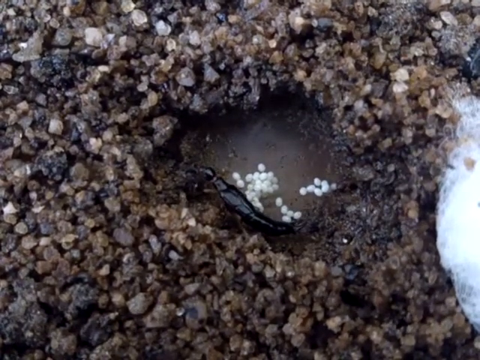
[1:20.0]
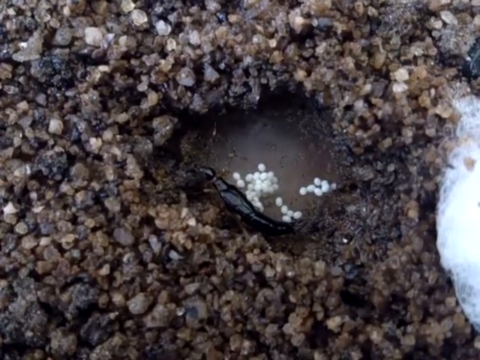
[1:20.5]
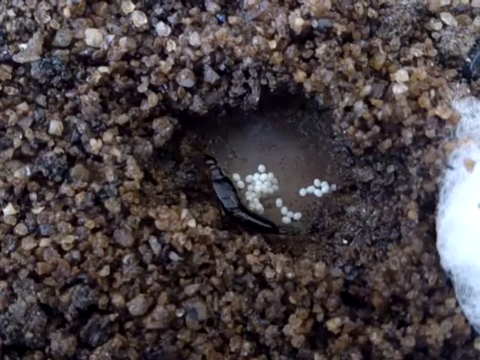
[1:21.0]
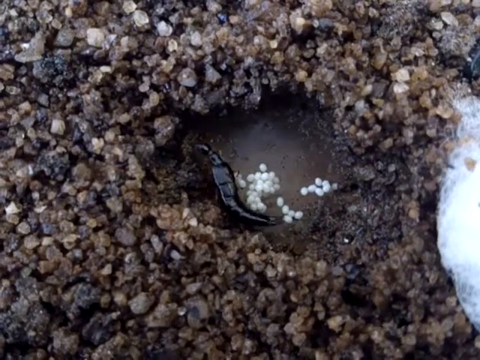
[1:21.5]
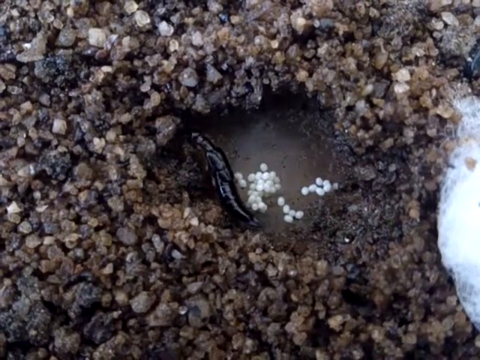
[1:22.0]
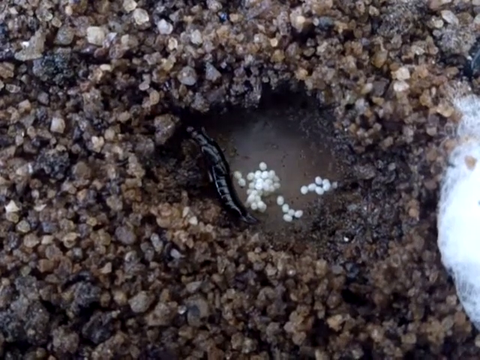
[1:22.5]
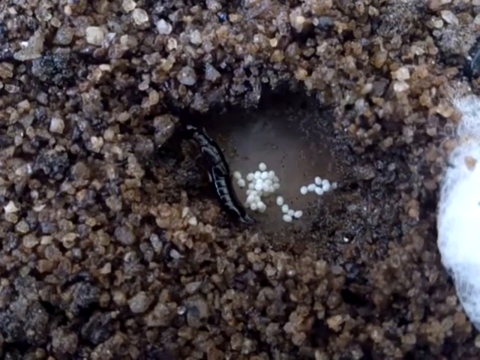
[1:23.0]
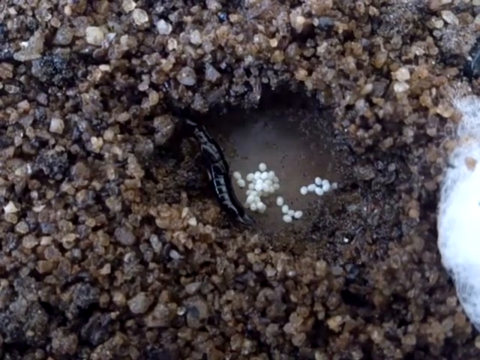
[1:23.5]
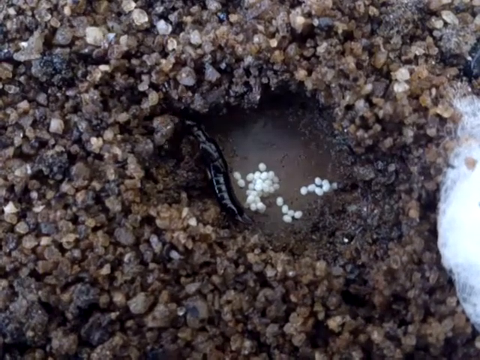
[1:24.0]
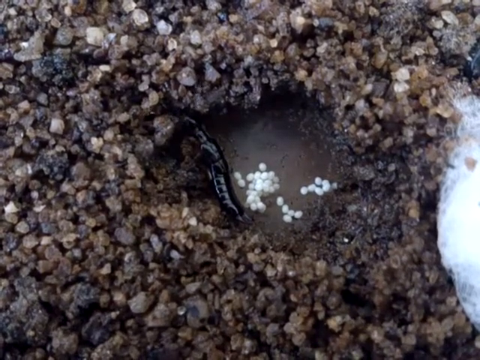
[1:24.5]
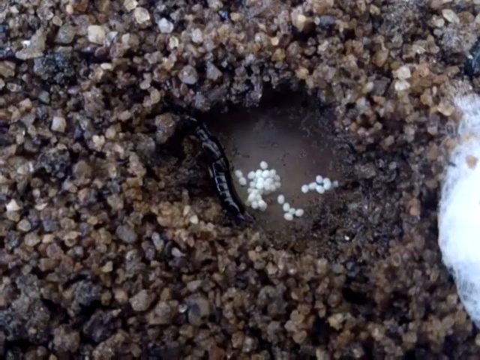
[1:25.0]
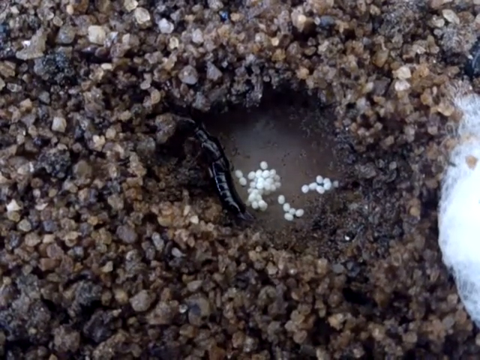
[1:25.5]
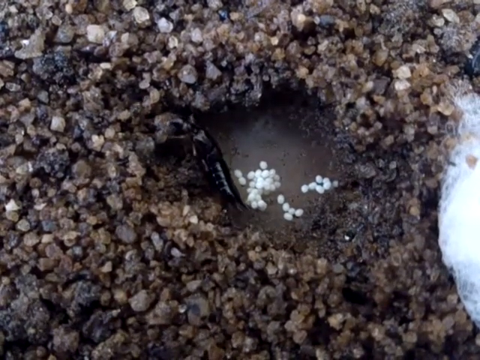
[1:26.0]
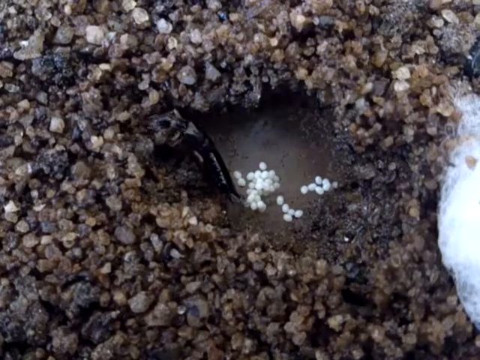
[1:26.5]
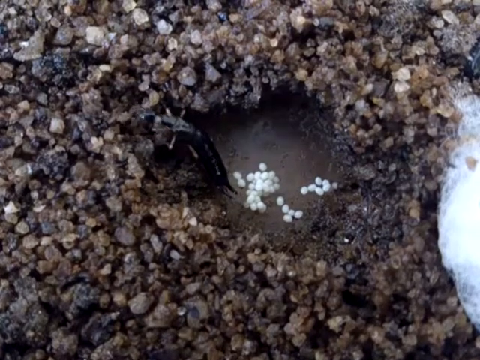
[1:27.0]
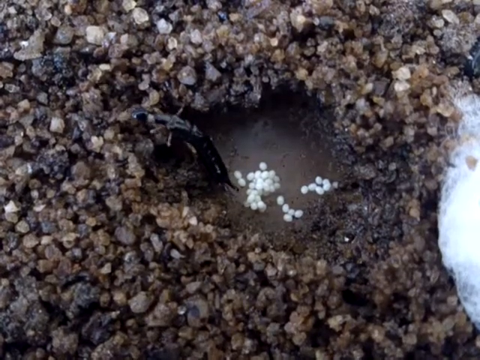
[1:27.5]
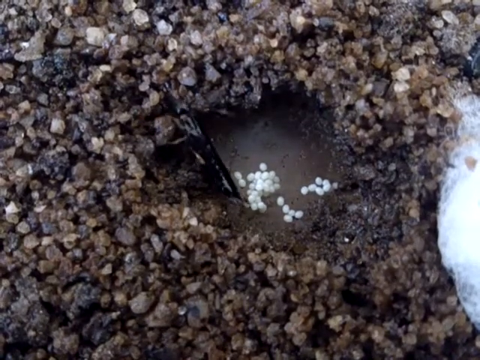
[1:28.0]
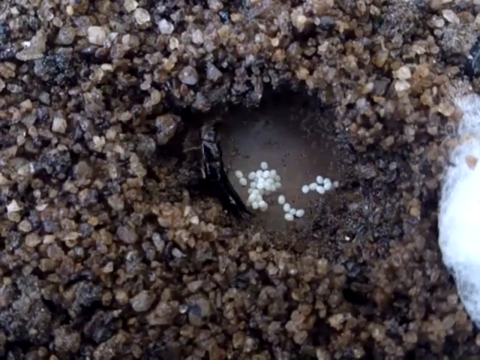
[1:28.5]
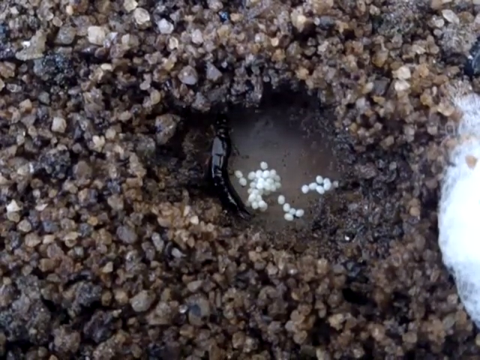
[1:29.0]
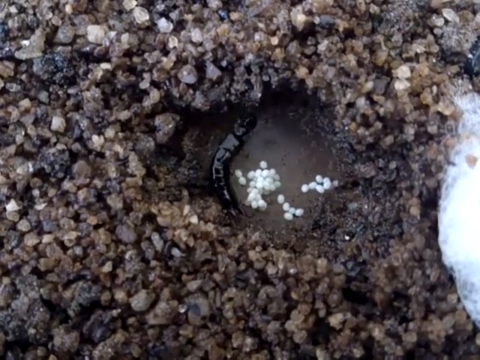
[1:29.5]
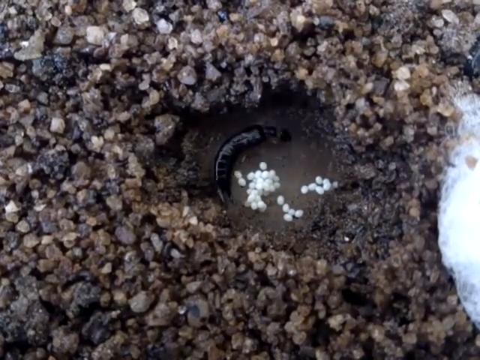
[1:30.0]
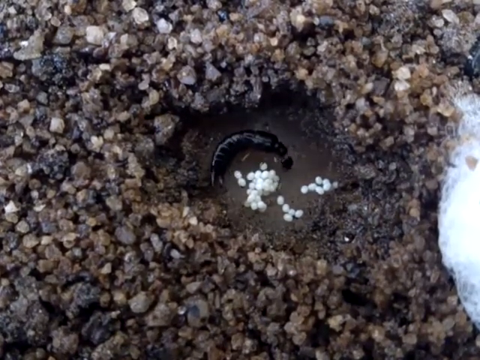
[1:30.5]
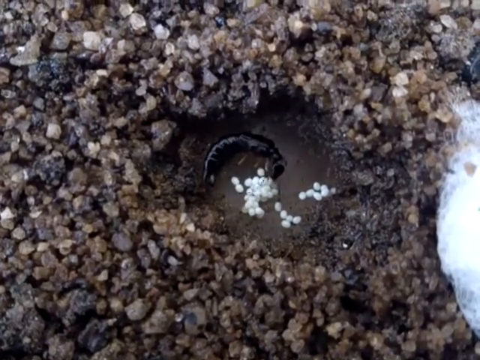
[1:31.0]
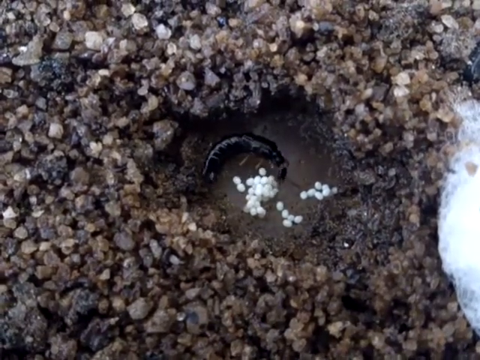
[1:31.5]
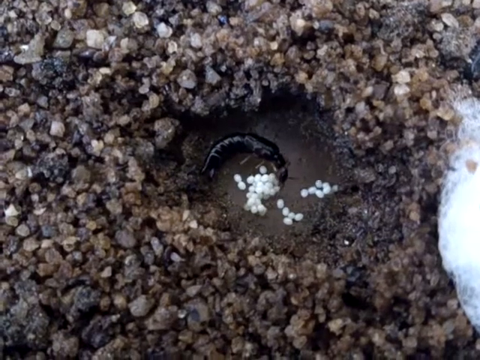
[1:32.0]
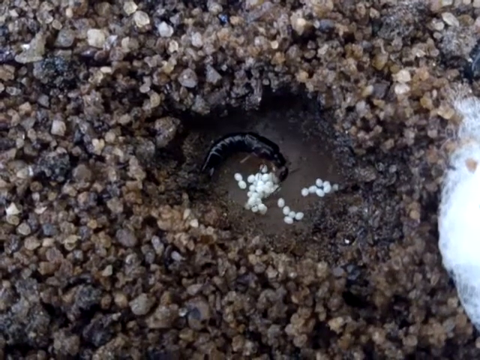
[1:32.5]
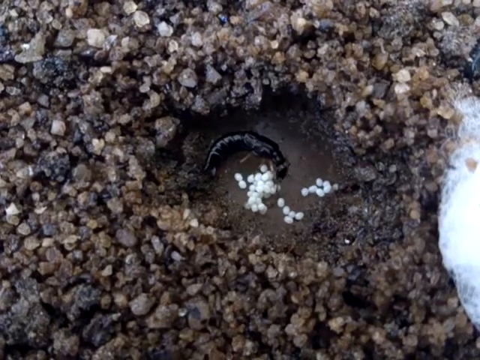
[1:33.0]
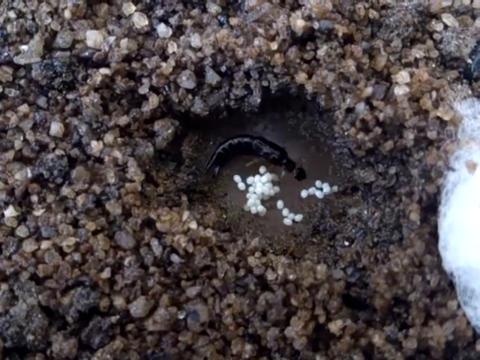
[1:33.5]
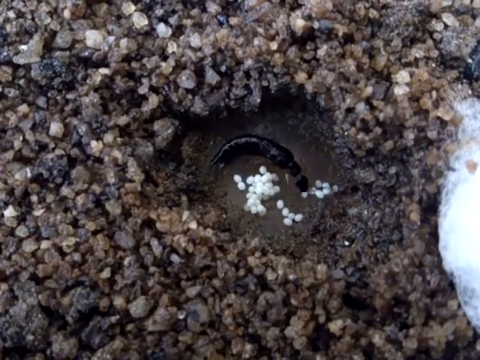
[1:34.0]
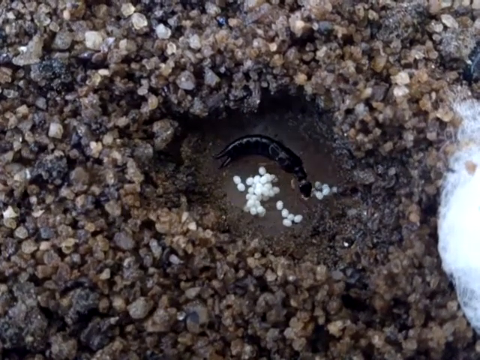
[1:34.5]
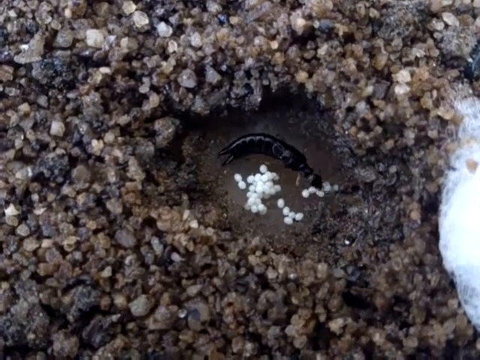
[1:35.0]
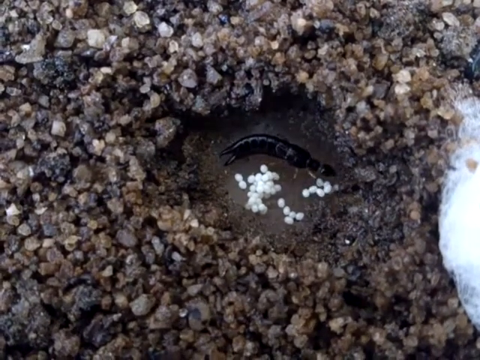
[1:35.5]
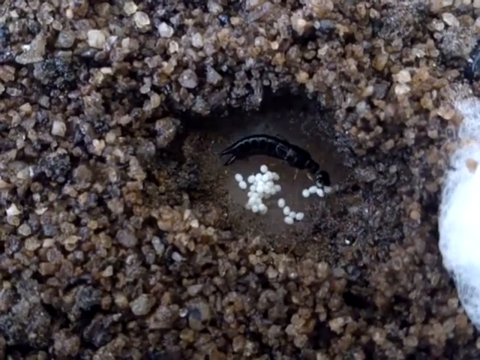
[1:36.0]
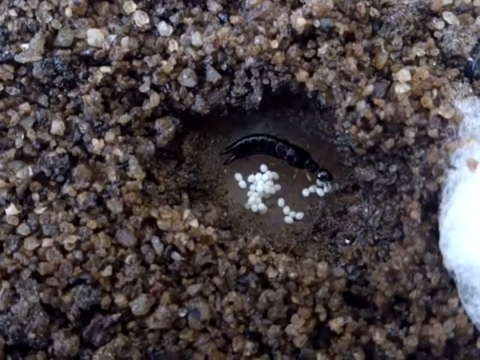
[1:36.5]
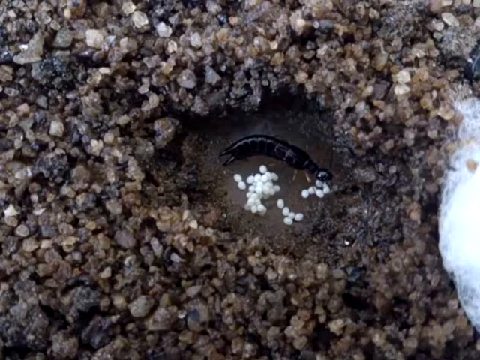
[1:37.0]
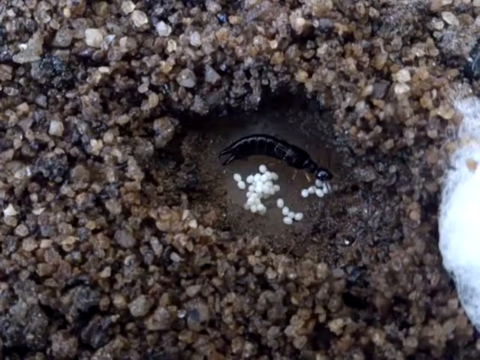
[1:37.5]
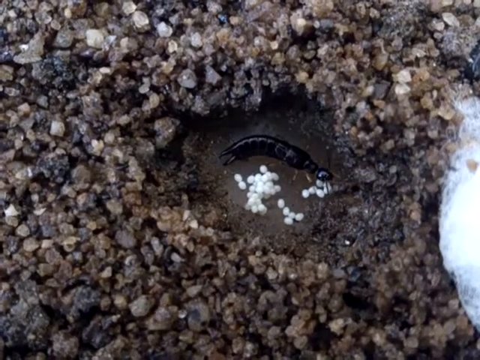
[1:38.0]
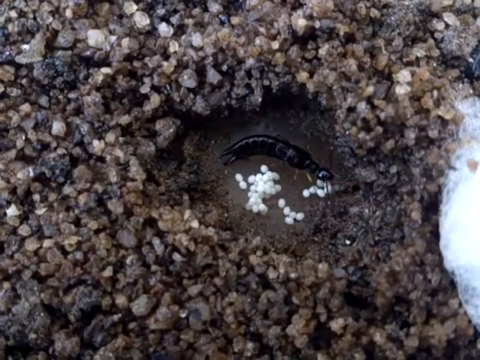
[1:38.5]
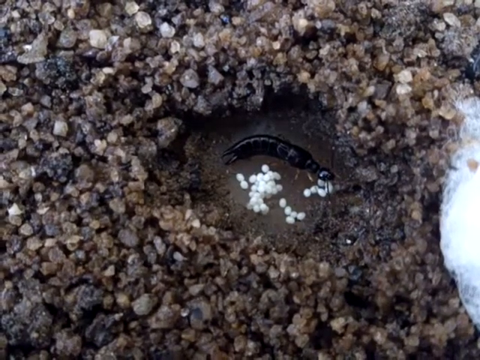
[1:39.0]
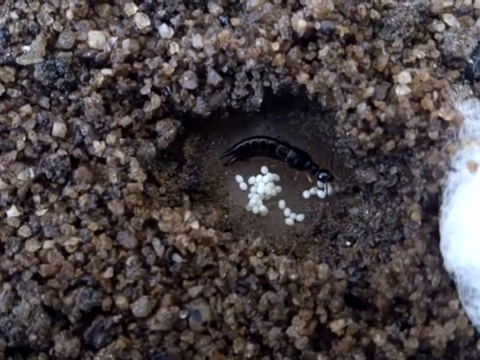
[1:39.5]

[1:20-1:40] A close-up shows very wet, gravelly ground with a small indentation in the center of the screen that has water in it. Floating in the water are several little white balls that appear to be eggs or larvae. A long black insect, roughly the length of the pool, explores the edges of the pool. It does not leave the pool, but it climbs up the edge onto some of the gravel and then goes back to inspecting the little balls. It seems to be exploring the little white balls a little and the boundaries of the pool where they are floating.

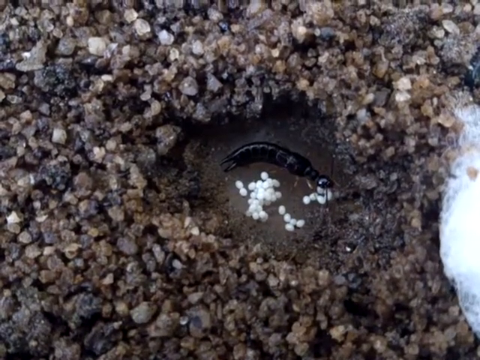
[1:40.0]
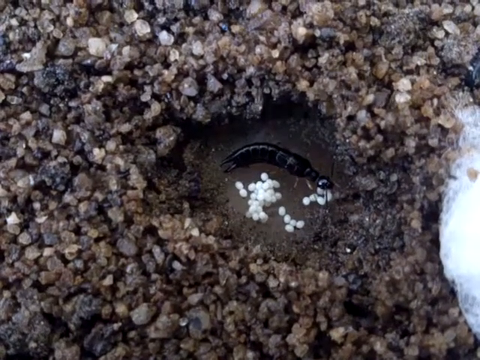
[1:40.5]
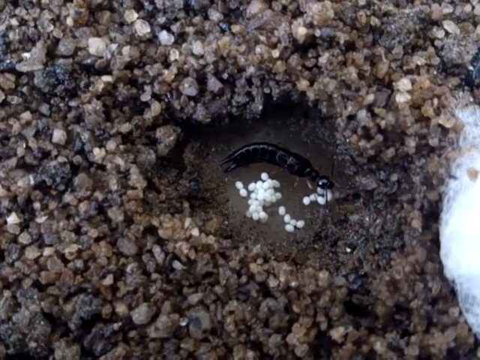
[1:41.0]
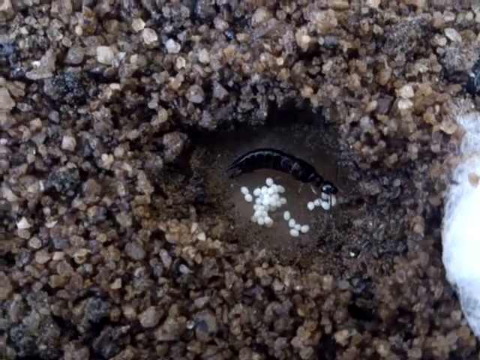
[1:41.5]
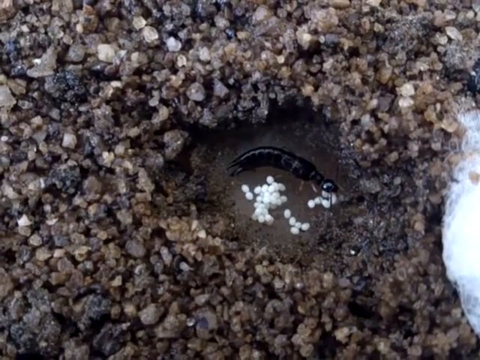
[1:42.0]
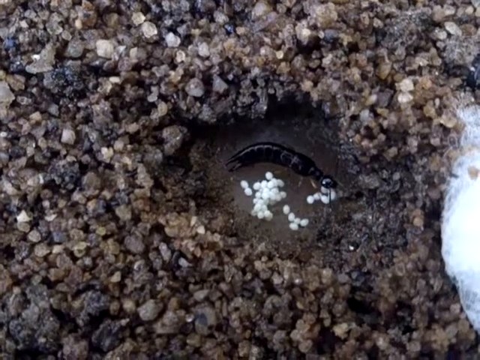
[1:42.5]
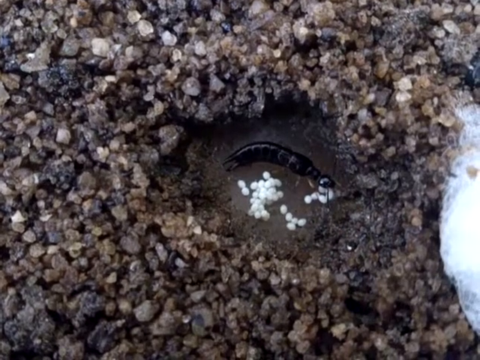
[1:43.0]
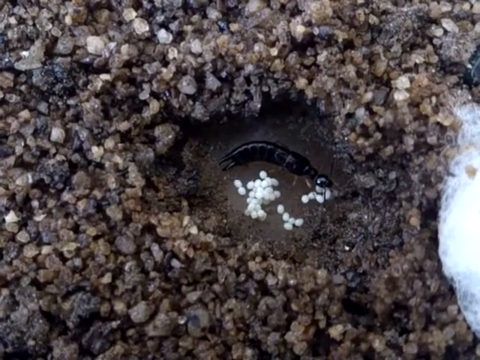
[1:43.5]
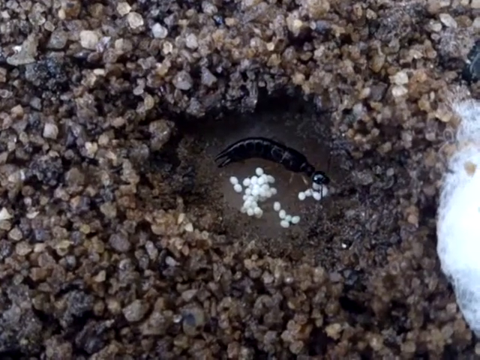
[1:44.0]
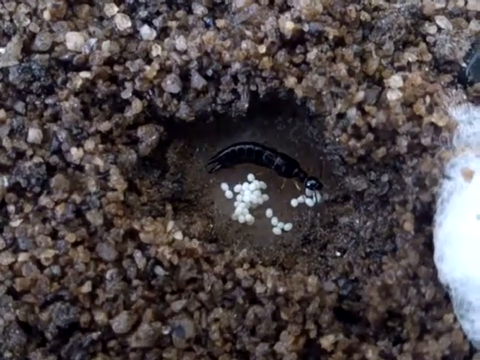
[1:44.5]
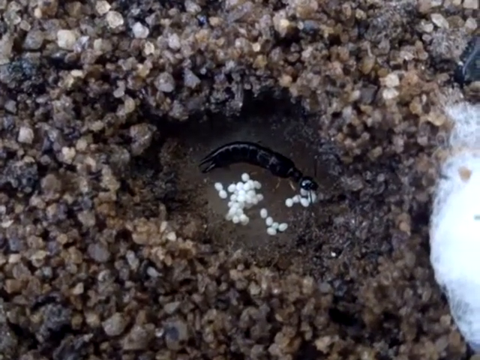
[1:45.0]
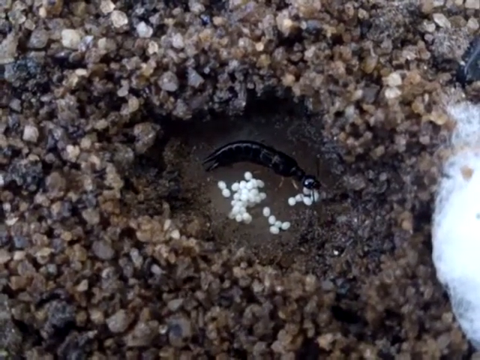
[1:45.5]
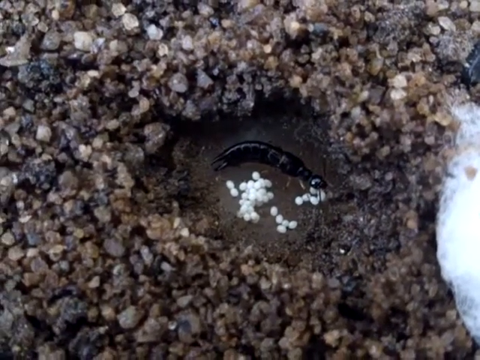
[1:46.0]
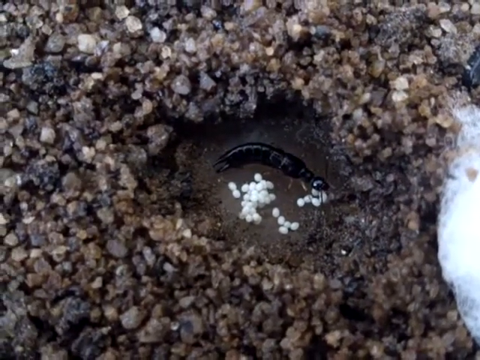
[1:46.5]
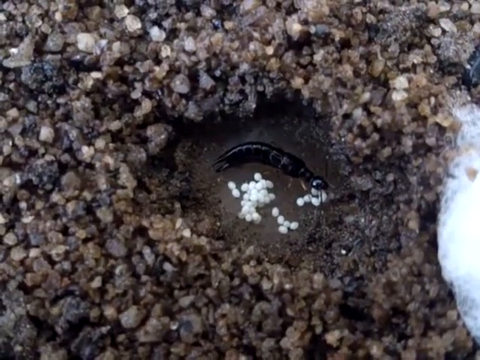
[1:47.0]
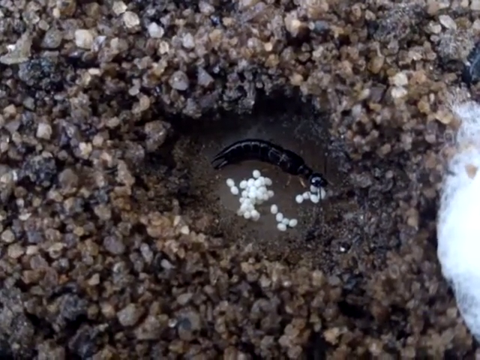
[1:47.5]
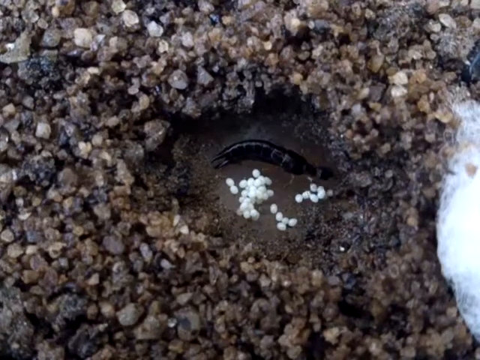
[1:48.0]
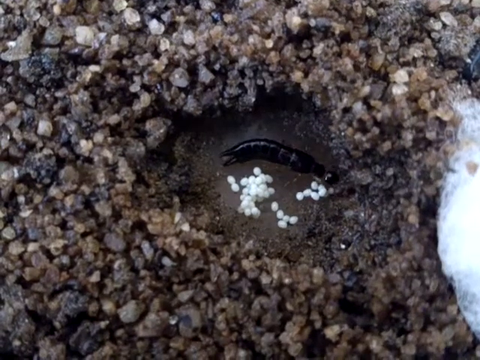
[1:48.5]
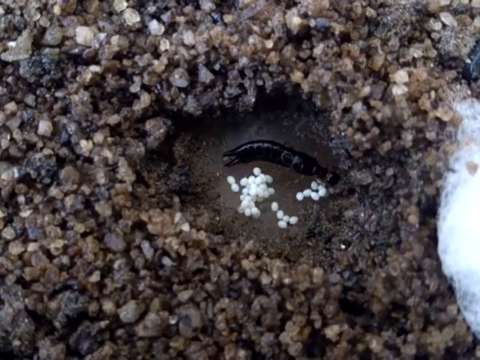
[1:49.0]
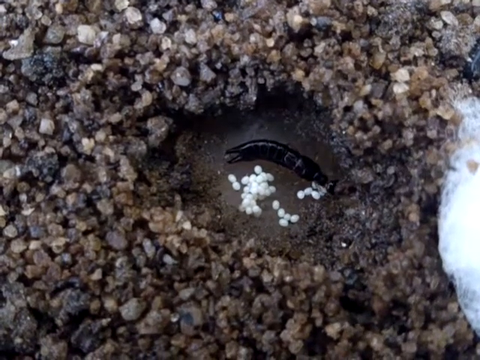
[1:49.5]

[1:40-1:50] A close-up shows very gravelly wet ground. Near the center of the screen is an indentation that appears to be filled with water; it is very small, maybe a couple of inches across. Inside this small pool, a long, black, shiny insect tends some little round white things, apparently eggs or larvae. The insect appears to just explore the little balls and does not attempt to leave the pool; it stays with them and possibly adjusts or moves one of them.